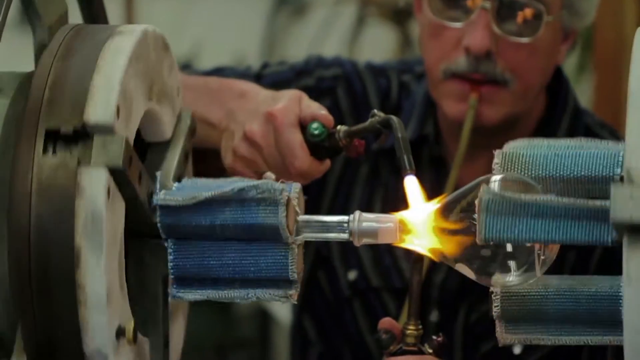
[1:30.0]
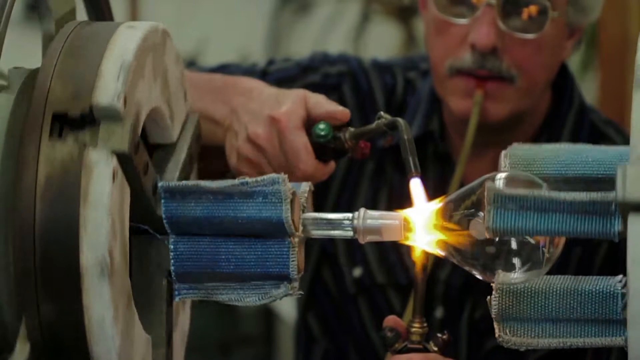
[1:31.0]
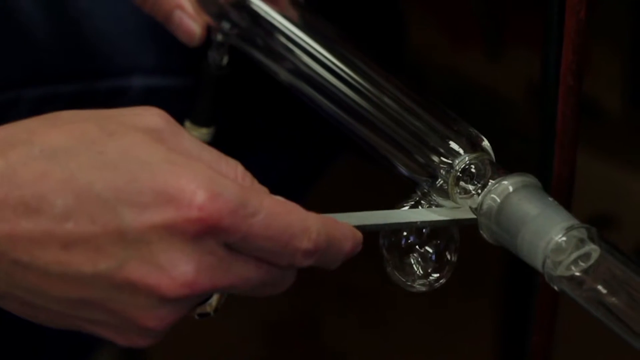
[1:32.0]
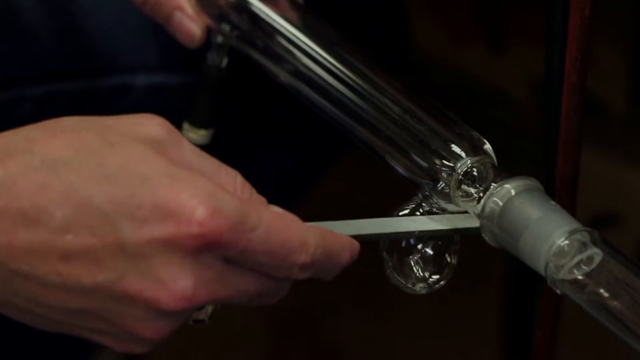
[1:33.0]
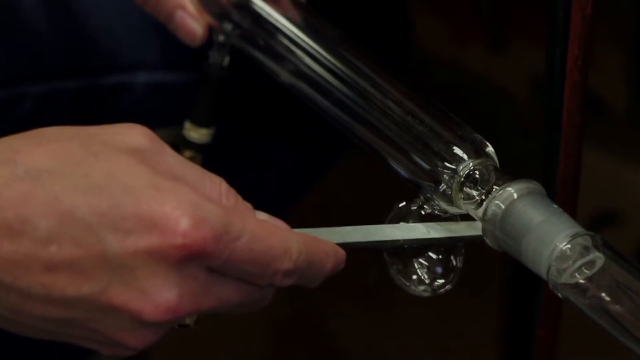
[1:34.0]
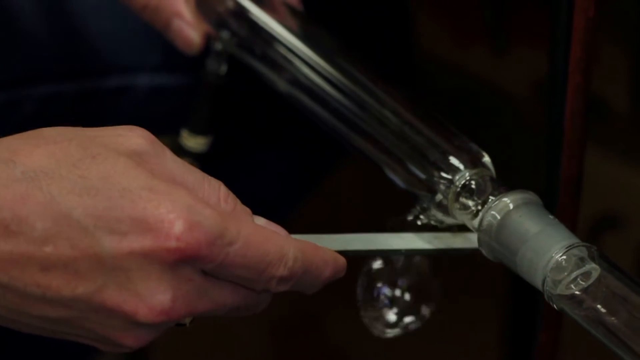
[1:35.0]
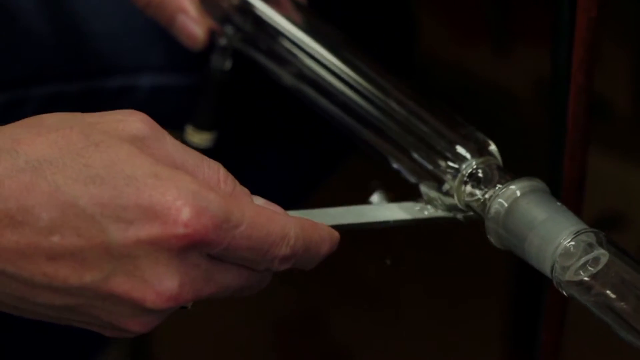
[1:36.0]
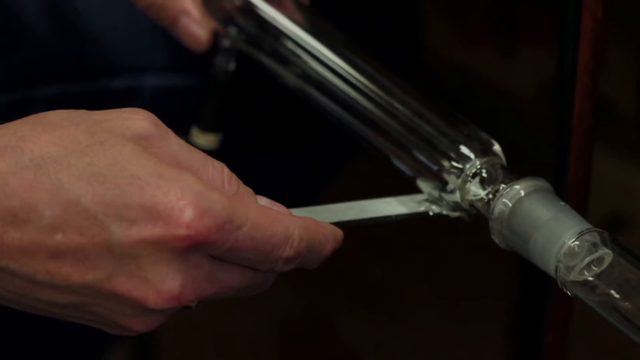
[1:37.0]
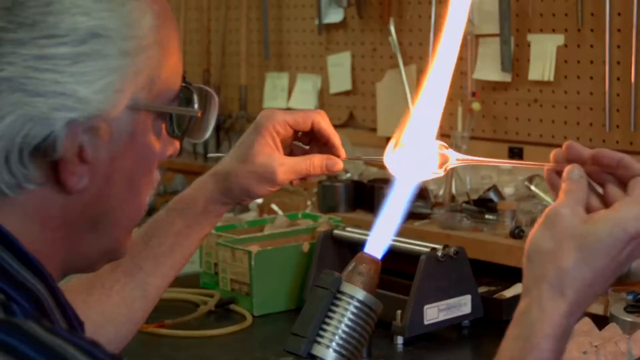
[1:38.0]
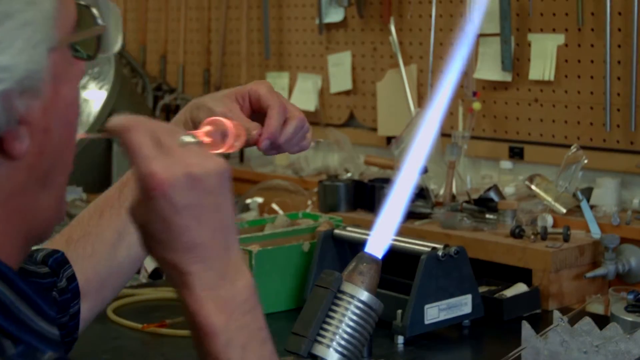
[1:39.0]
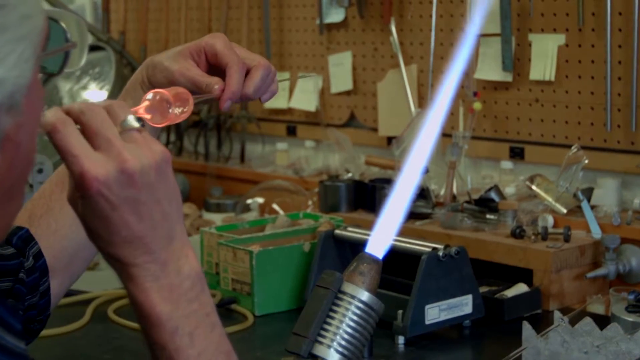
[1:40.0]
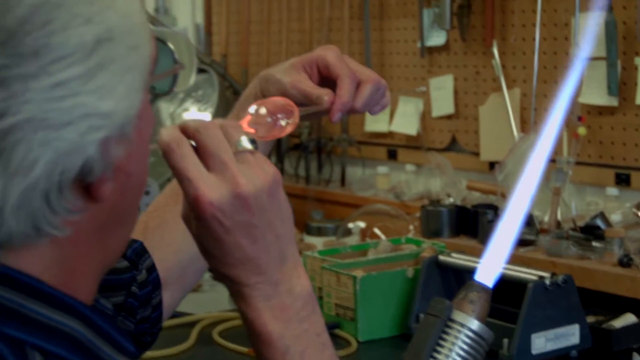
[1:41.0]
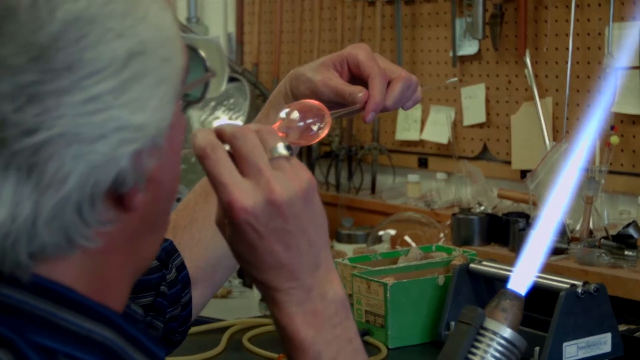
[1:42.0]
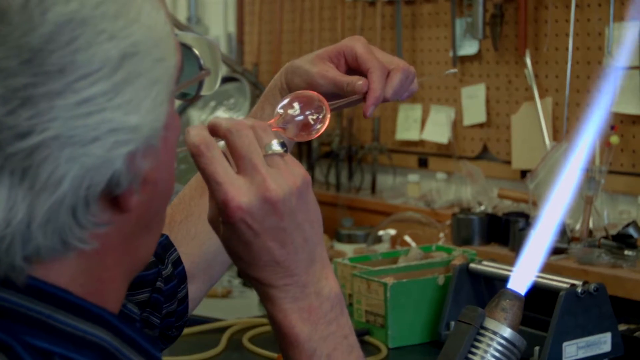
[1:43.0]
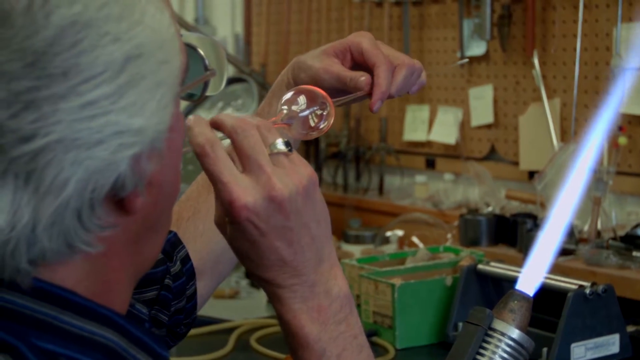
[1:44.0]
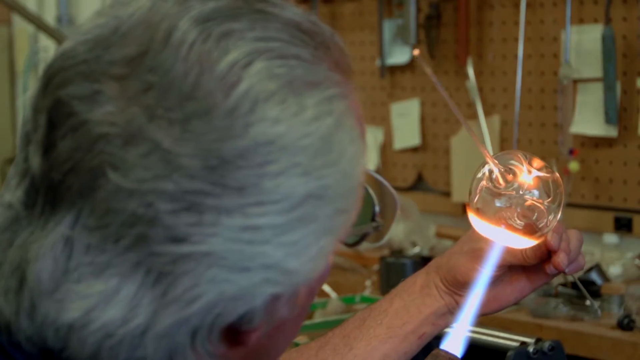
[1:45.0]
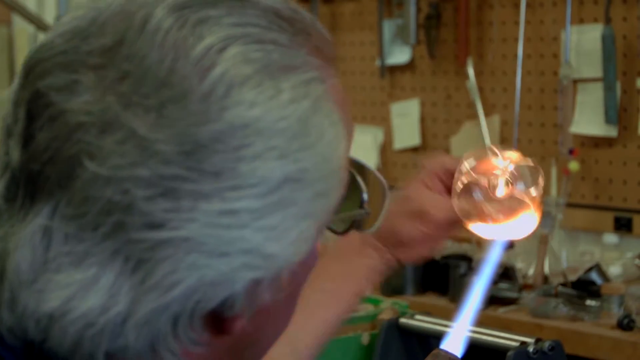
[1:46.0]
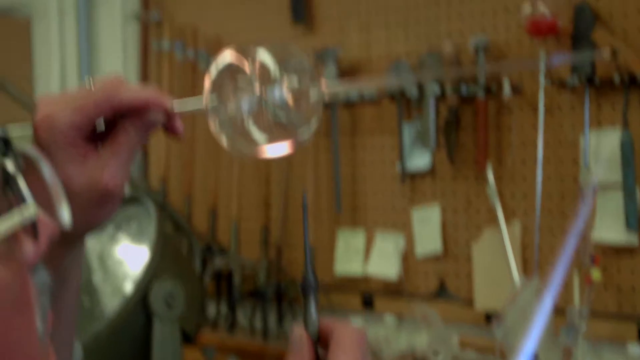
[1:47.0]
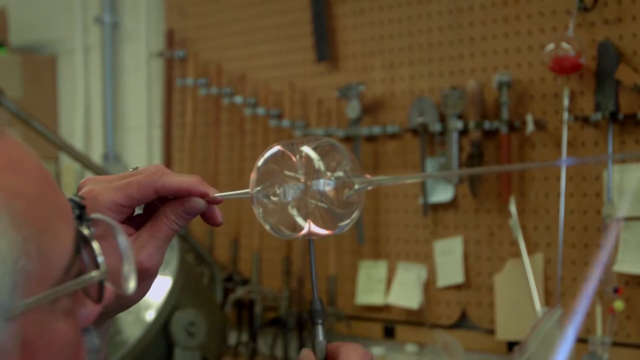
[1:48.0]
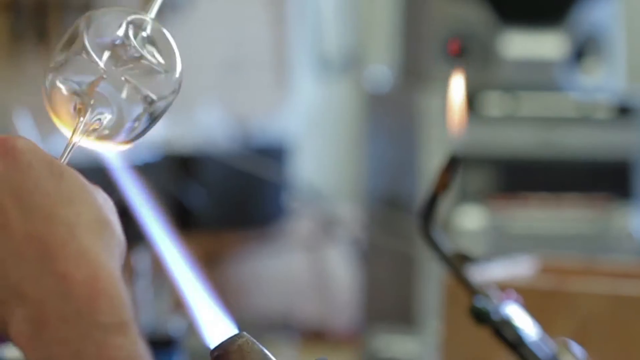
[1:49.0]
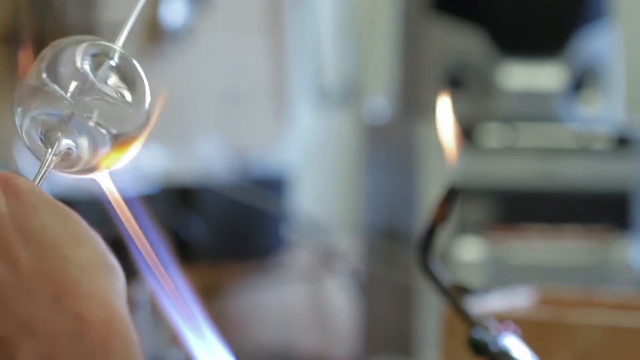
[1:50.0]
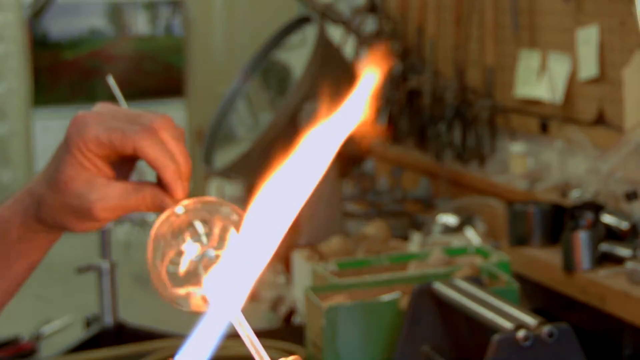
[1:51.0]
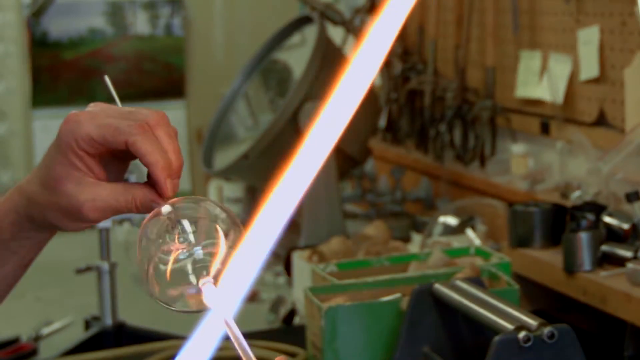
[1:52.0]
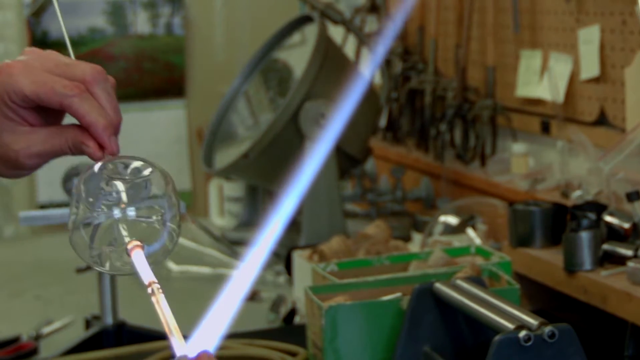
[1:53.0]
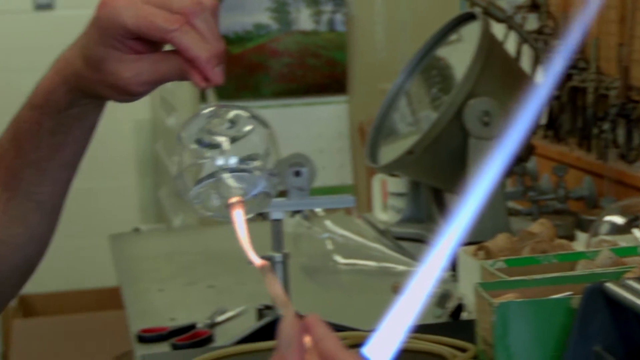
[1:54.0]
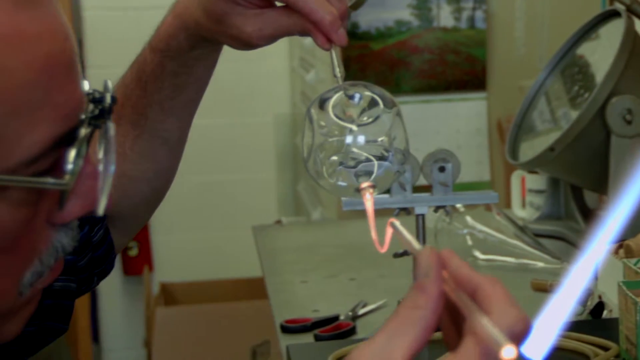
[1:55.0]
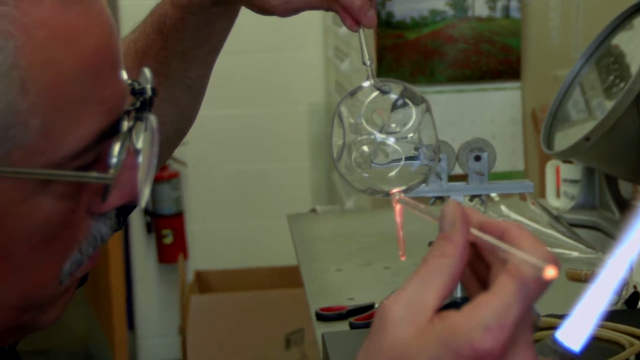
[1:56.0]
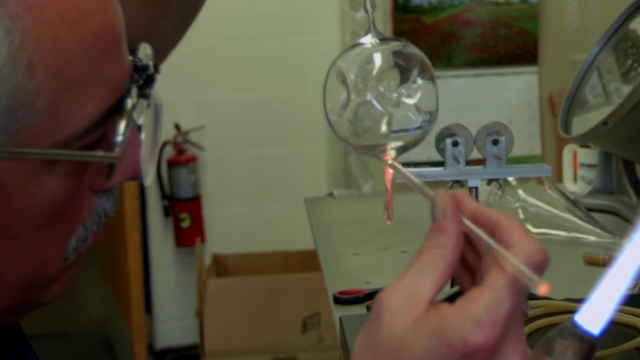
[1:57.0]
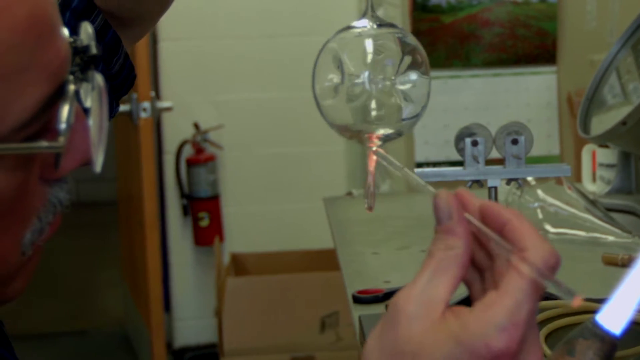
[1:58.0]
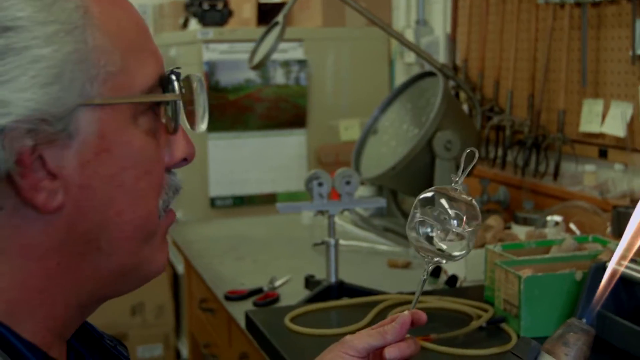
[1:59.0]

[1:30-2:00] He blows into two sticks and the glass enlarges. He burns it again in the fire, then makes a hole through the glass, and continues to mould it into a perfect, architectural glass shape. He talks again while looking at the camera and holding the shape.